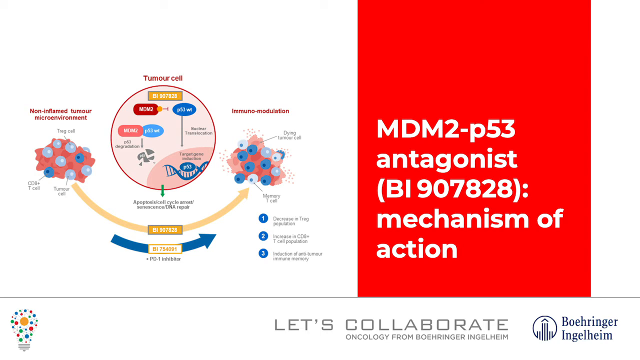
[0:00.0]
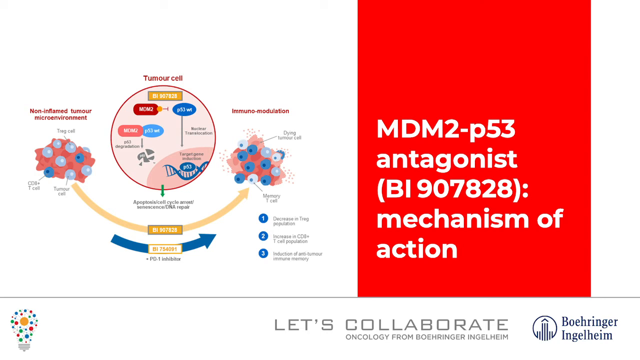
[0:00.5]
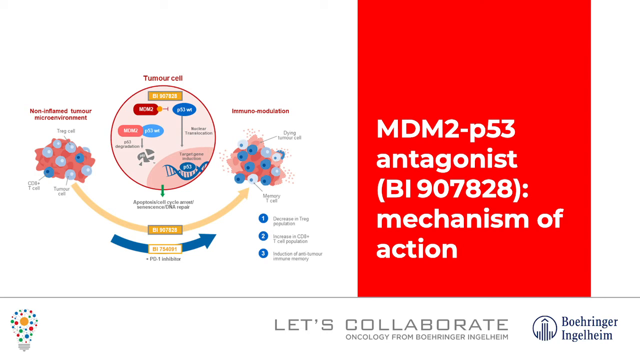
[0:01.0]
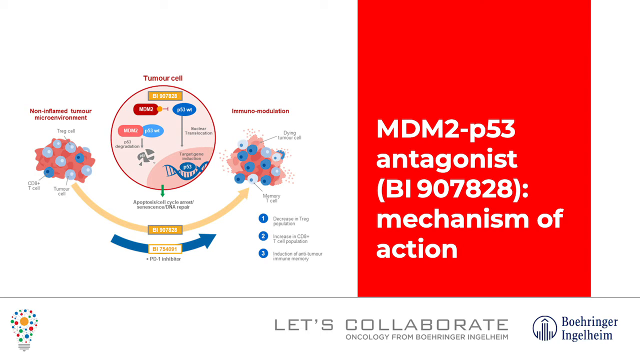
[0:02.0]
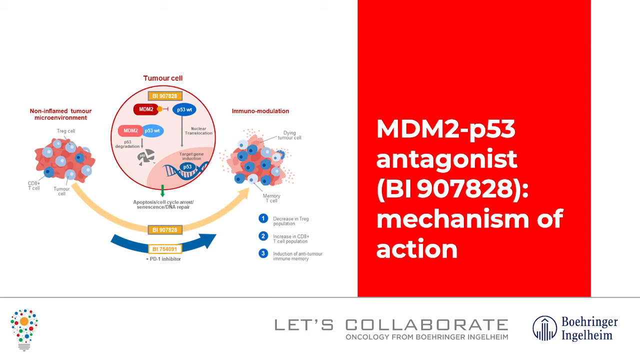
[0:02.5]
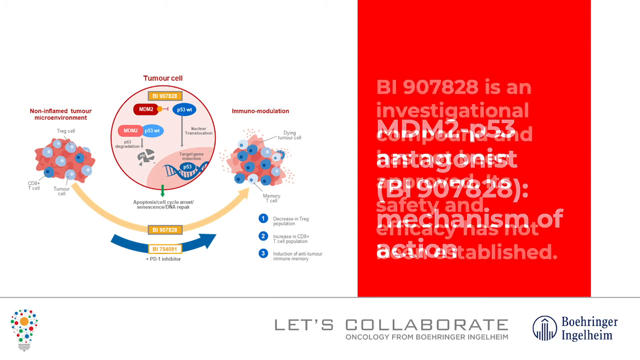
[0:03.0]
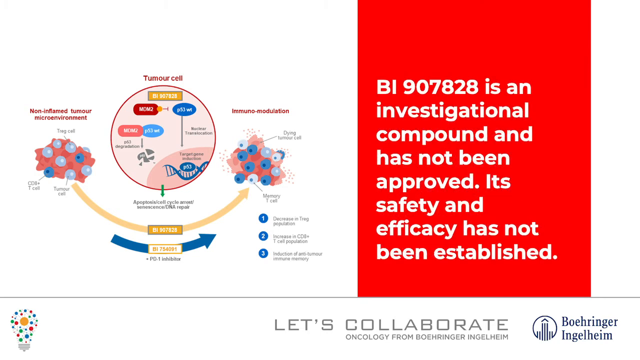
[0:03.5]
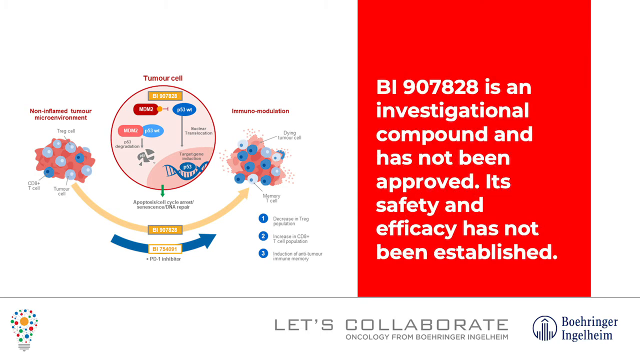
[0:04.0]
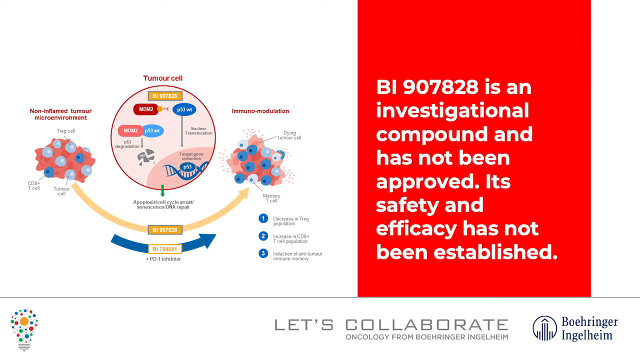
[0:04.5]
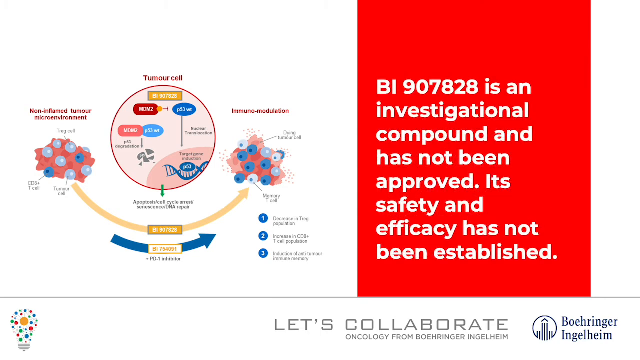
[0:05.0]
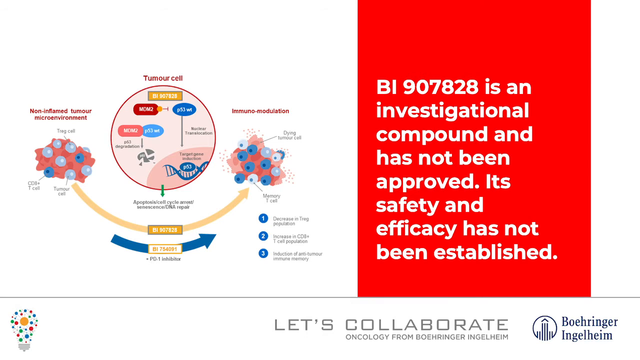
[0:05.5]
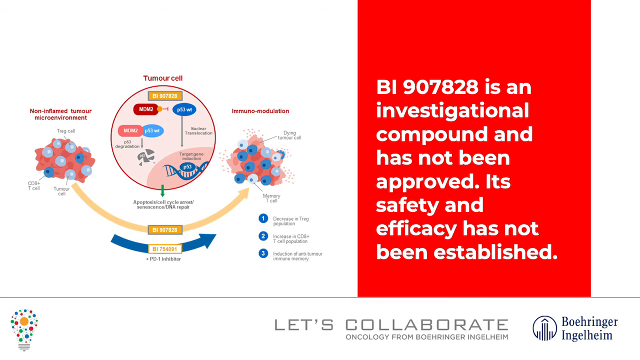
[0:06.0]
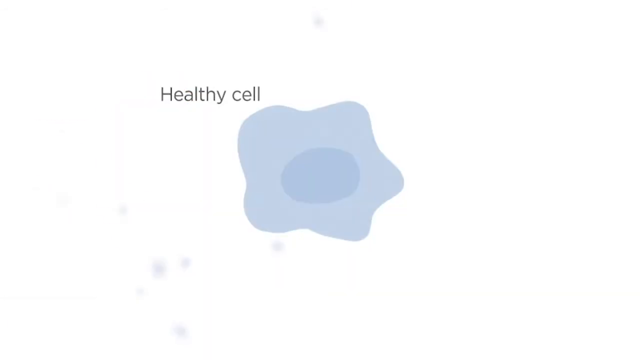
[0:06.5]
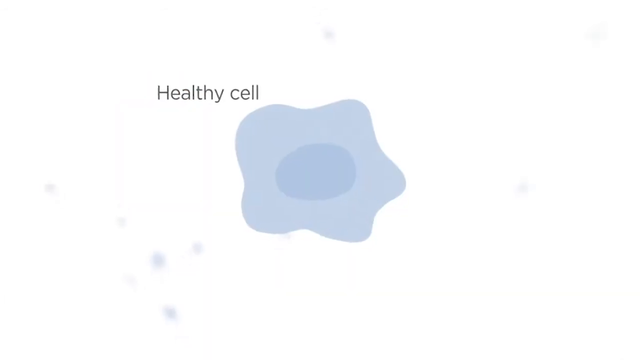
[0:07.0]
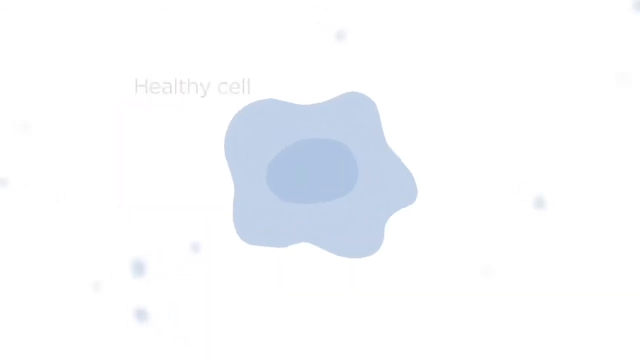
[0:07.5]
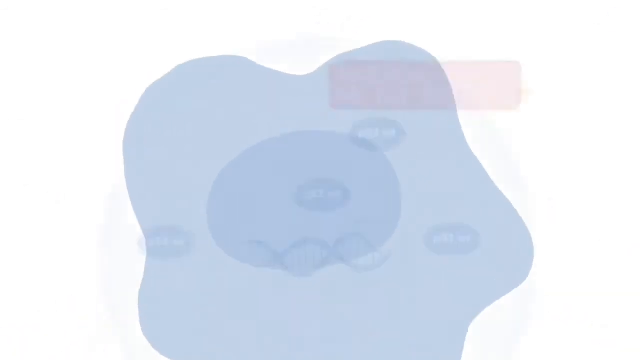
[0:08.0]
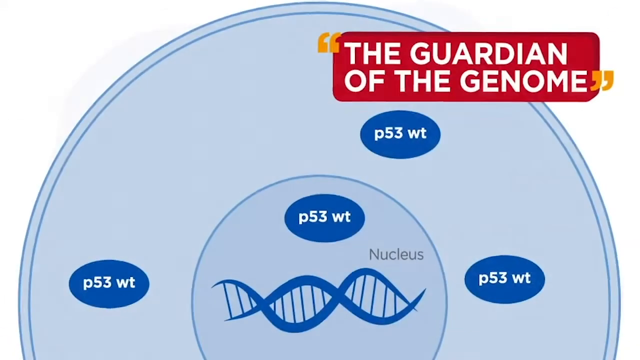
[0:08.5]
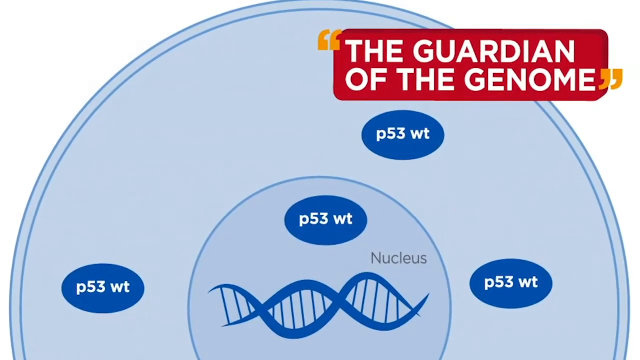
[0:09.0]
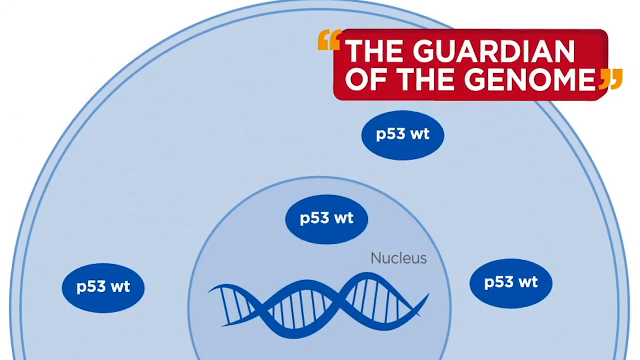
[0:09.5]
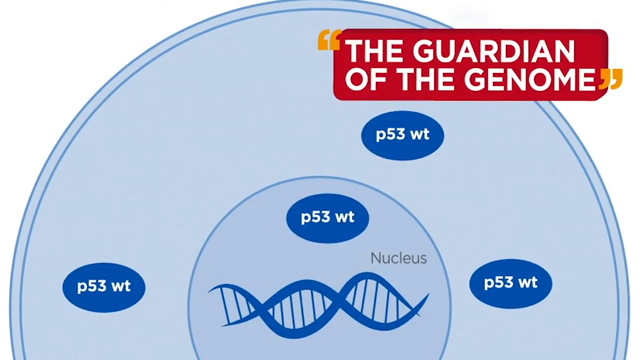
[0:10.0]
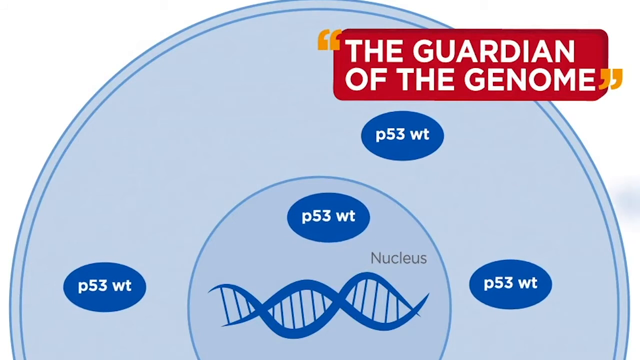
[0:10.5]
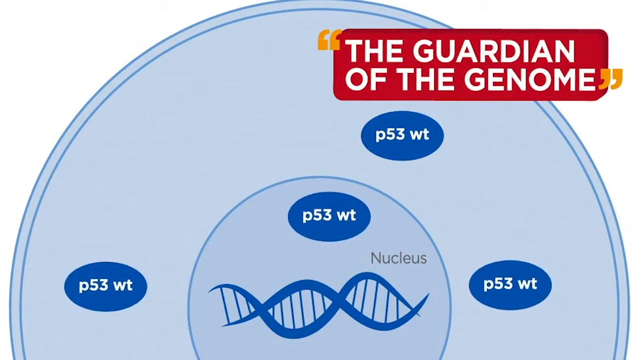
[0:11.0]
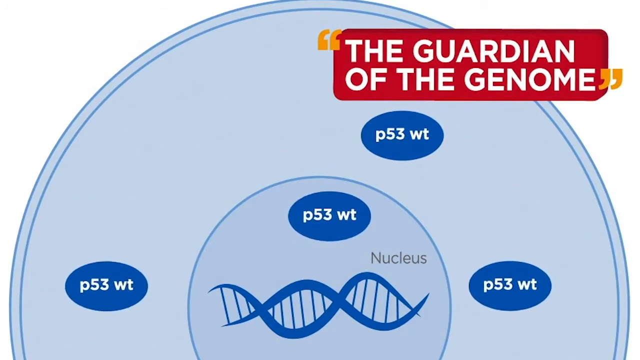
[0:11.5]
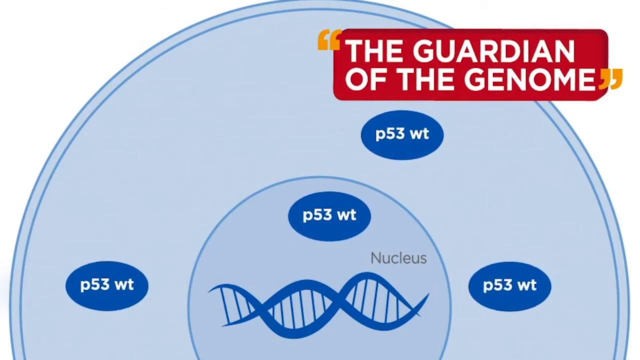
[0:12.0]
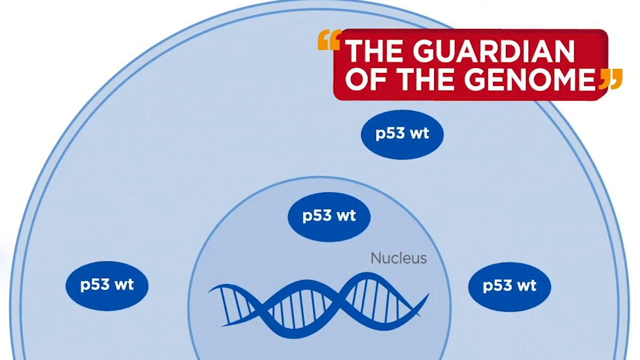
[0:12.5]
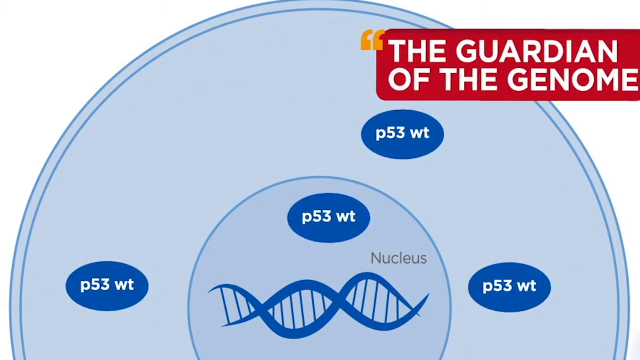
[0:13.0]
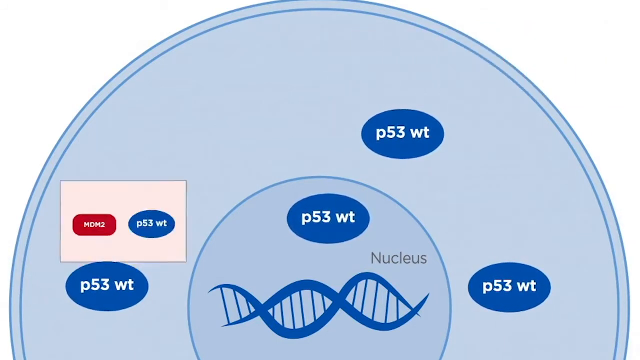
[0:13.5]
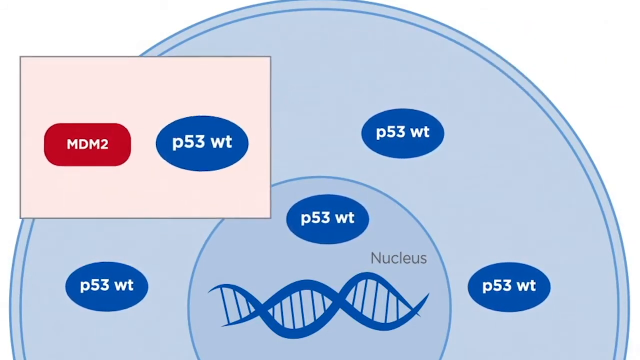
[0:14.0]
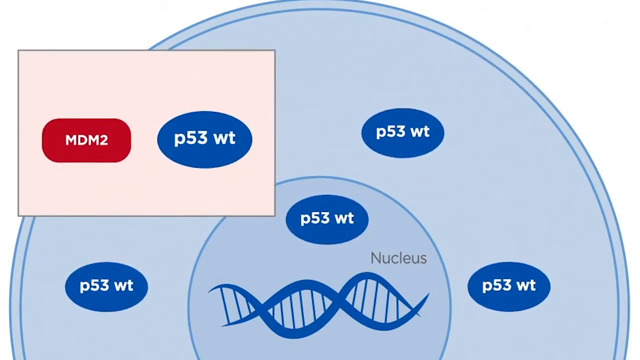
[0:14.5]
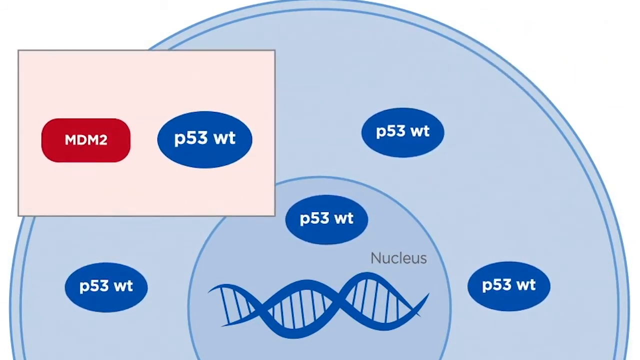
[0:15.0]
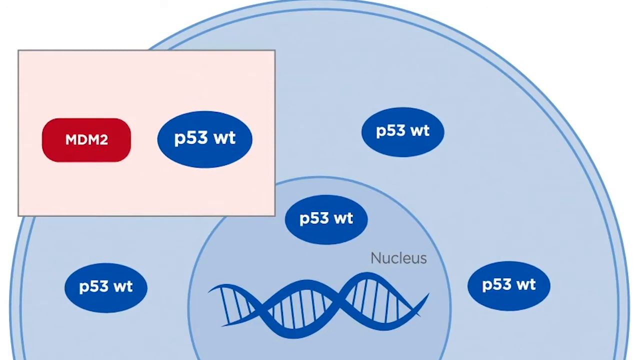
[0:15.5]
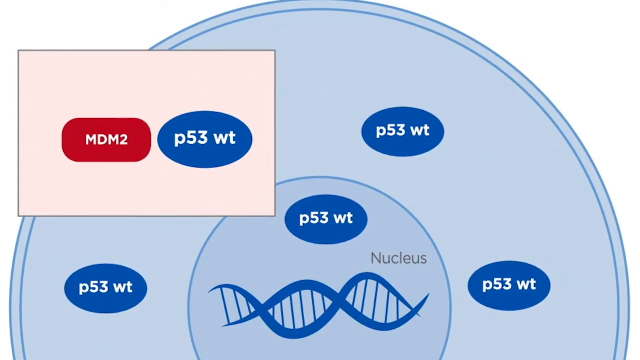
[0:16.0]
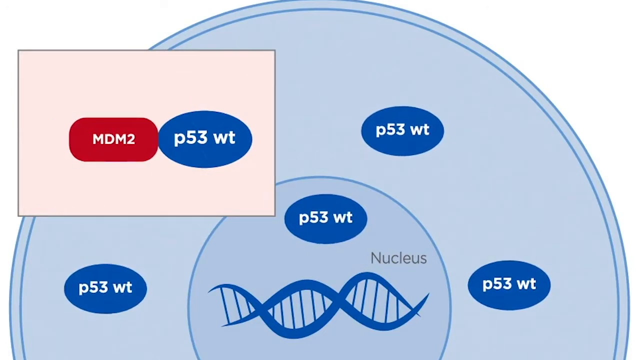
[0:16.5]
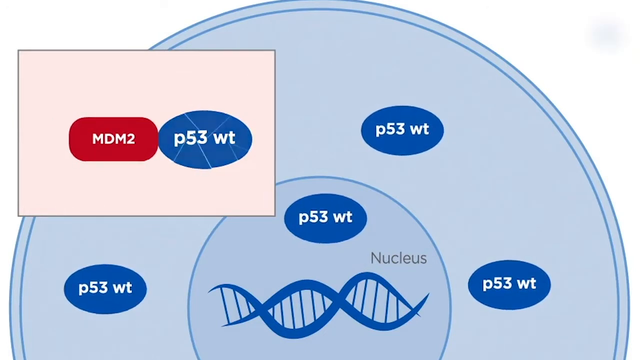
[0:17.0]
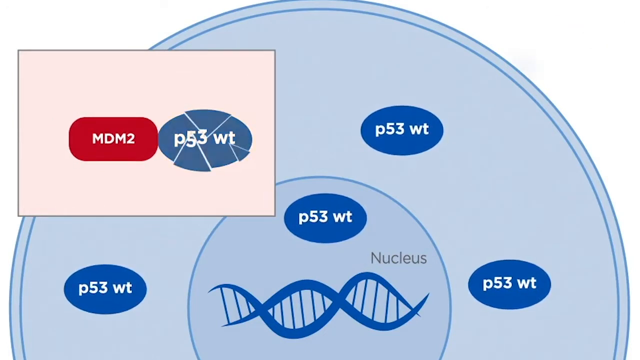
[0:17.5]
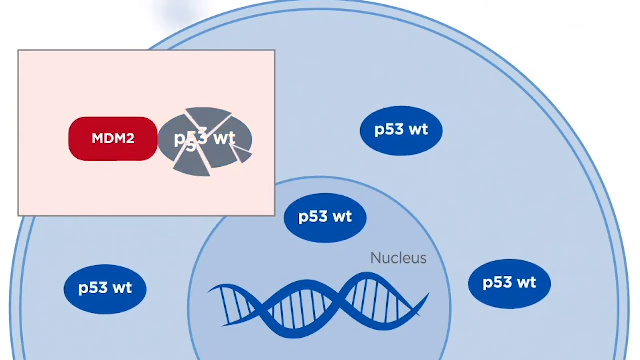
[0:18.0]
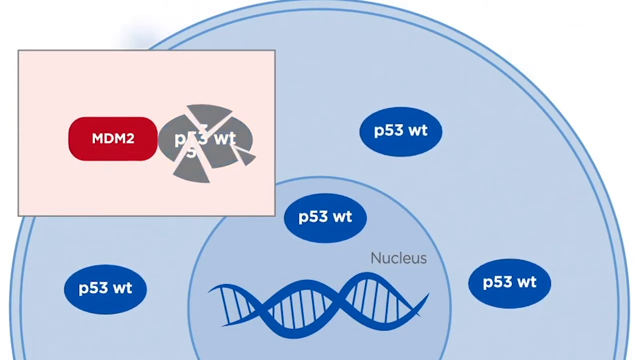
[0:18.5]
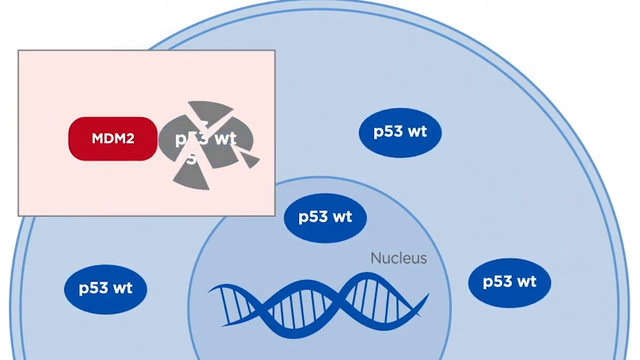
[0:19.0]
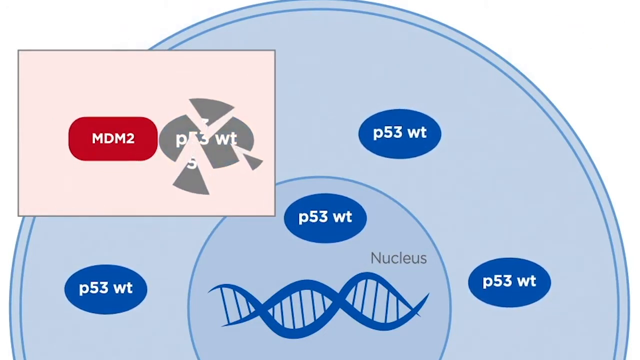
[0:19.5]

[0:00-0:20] A medical diagram appears as a split screen, with a cell on one side and, on the right side, a description that reads "MDM2-p53 (BI 907828) mechanism of action". The next screen shows a big healthy cell with the text "the guardian of the genome". Labels such as the nucleus are on the cell, and a pop-up box appears on the left side reading "MDM2-P53". In the split screen, one side shows the tumor cell and what is around it, then a healthy cell, while the other side names the cell. Text at the bottom reads "let's collaborate" and "Oncology", and "Boeringer-Ingelheim" appears in the lower right-hand corner. The diagram depicts a cancerous cell and how it is broken up.